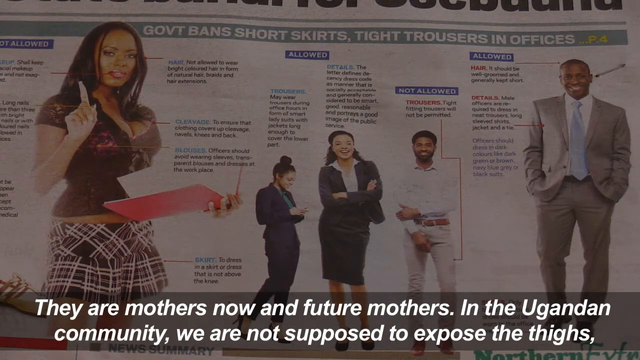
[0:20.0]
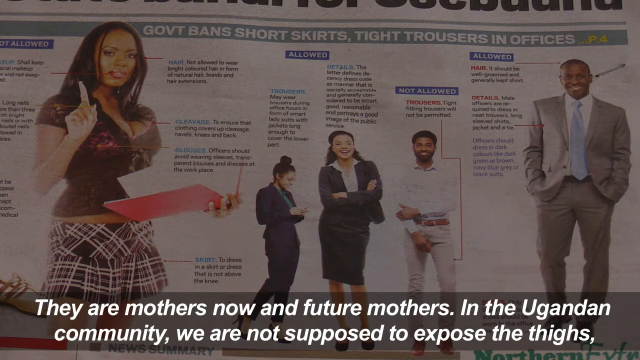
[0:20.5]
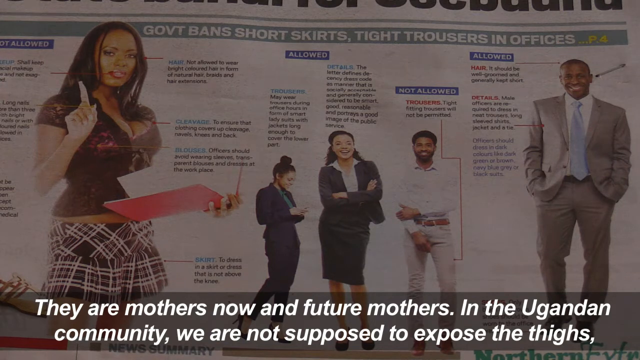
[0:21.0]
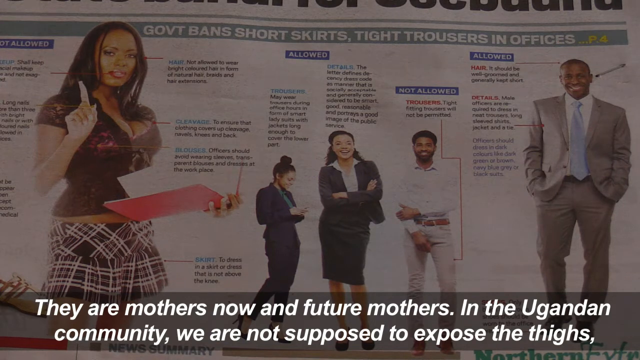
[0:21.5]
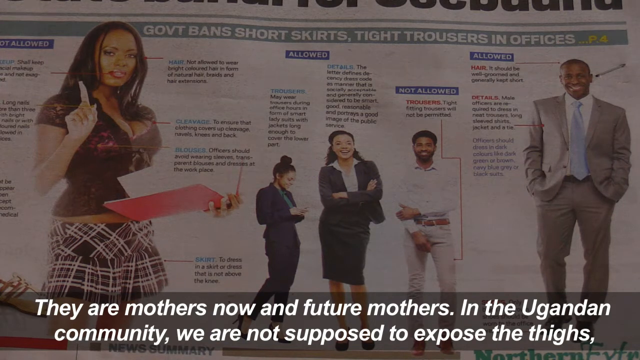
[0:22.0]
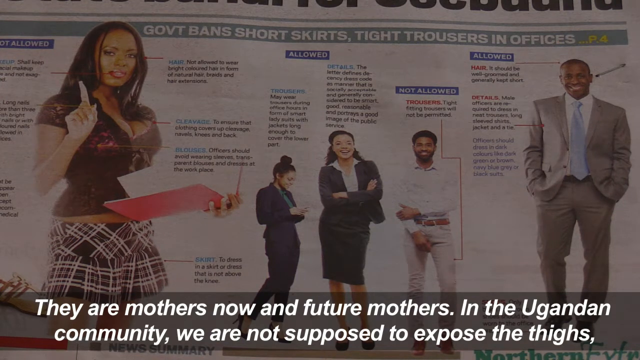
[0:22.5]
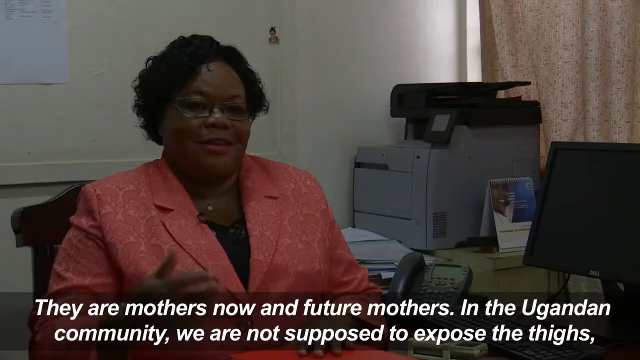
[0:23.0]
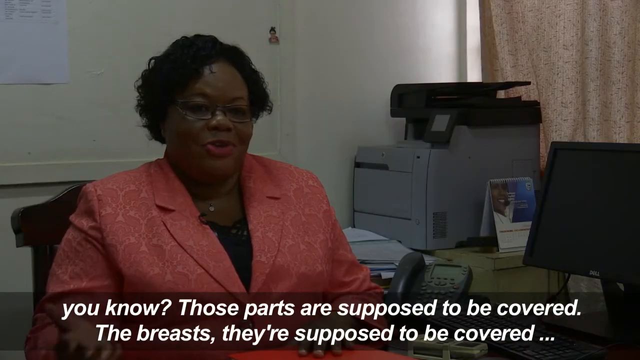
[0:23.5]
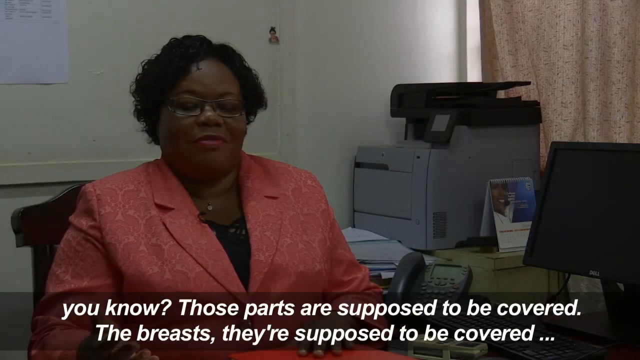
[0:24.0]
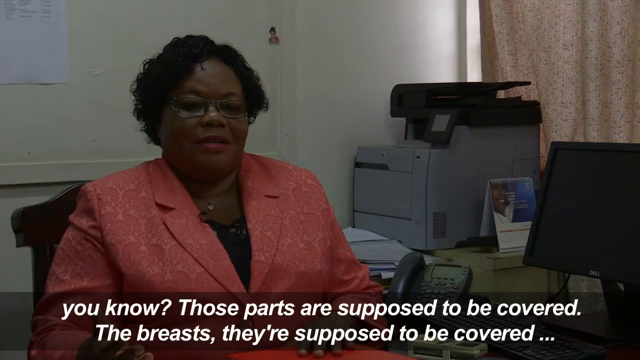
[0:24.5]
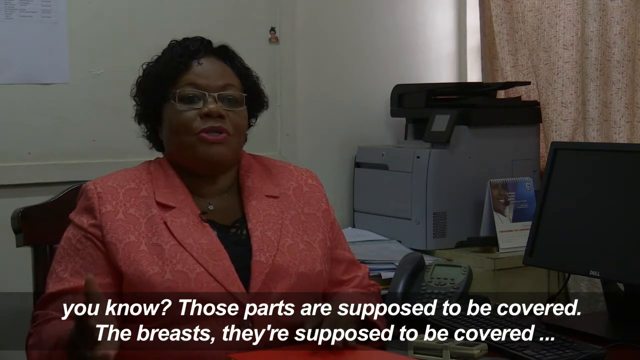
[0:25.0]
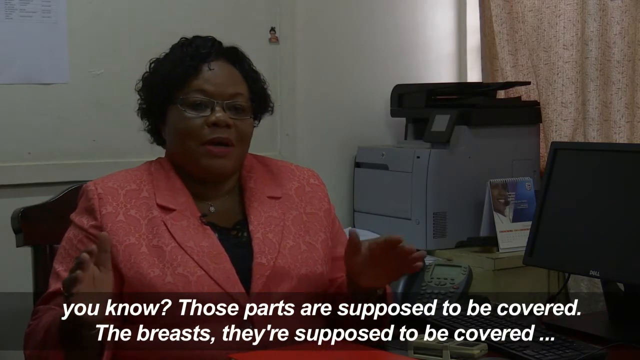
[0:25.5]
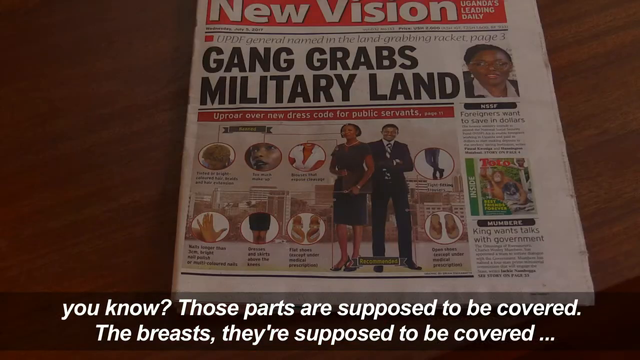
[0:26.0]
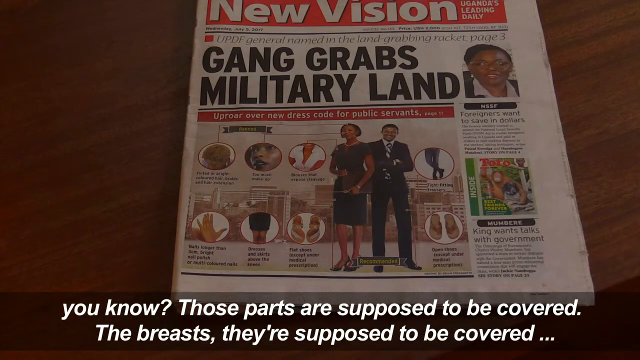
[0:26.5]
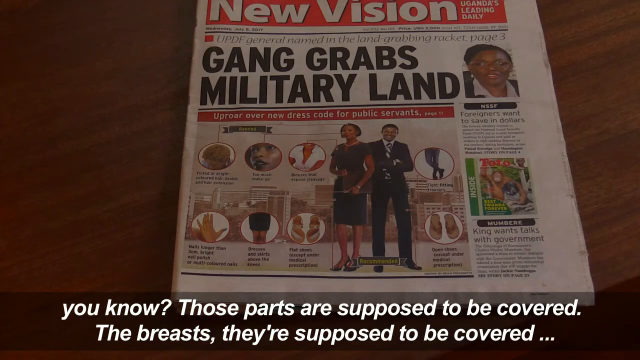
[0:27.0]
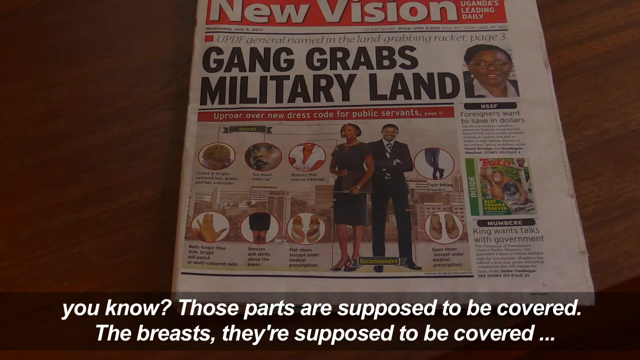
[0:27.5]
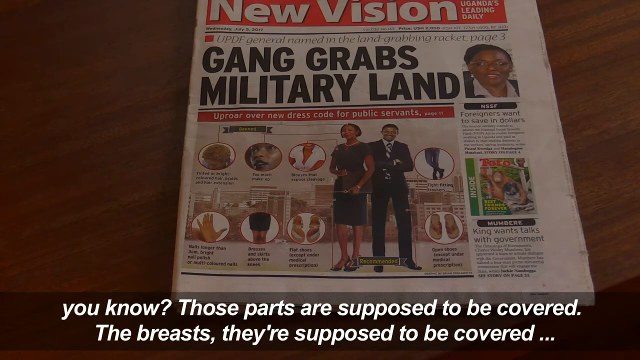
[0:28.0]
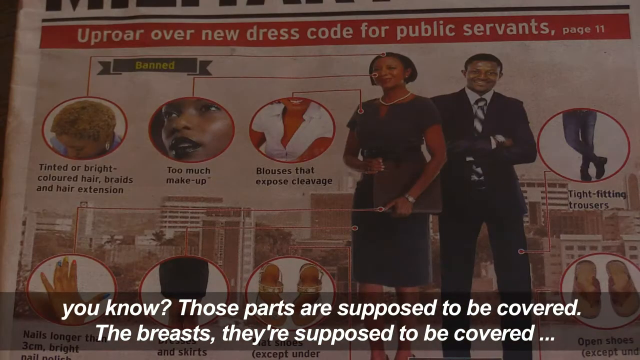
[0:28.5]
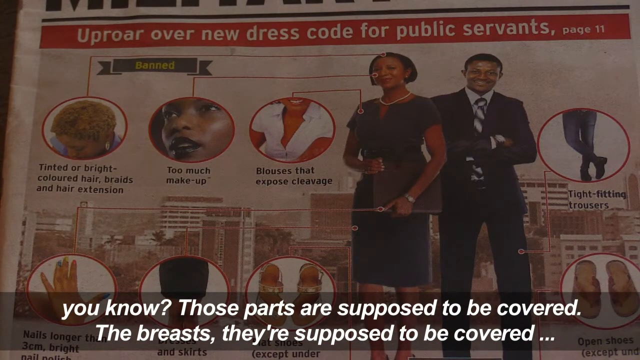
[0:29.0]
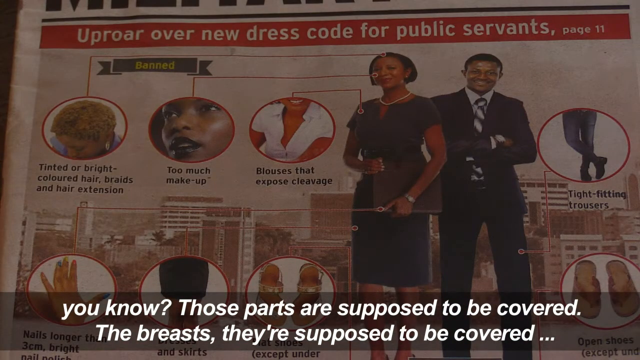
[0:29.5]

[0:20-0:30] The camera zooms in on what looks like the cover of a newspaper. A subtitle in white text on a black background reads "there are mothers now, future mothers in the Ugandan community". The newspaper article shows a woman who is slightly underdressed, with arrows pointing toward parts of her body, including cleavage. It then shows what is allowed: a woman in a suit and a well-dressed man. The woman sitting in the office appears, wearing a pink suit and a black top. A small image of what looks like her ID photo is on the wall. The view then moves to the second newspaper, which was on the left side of the table.